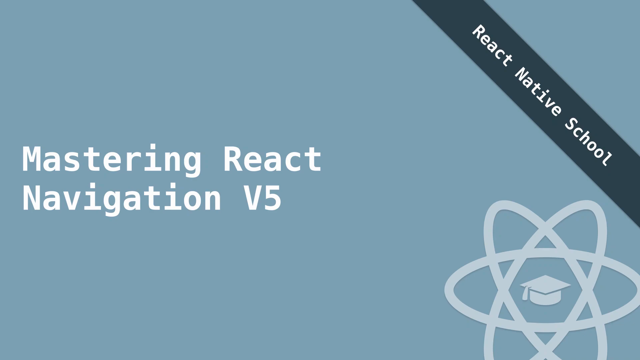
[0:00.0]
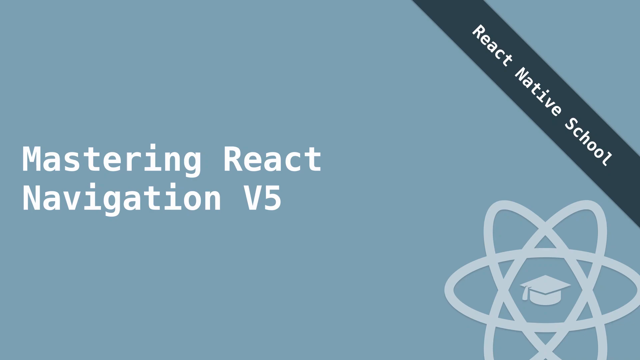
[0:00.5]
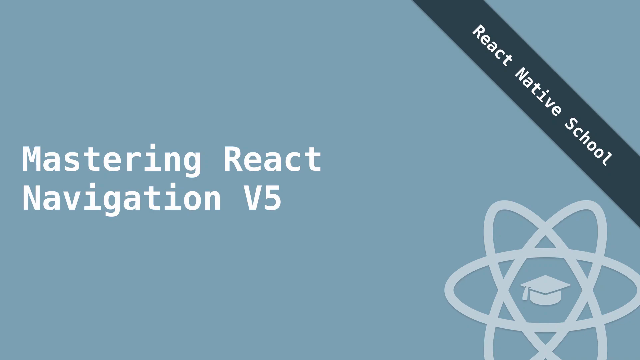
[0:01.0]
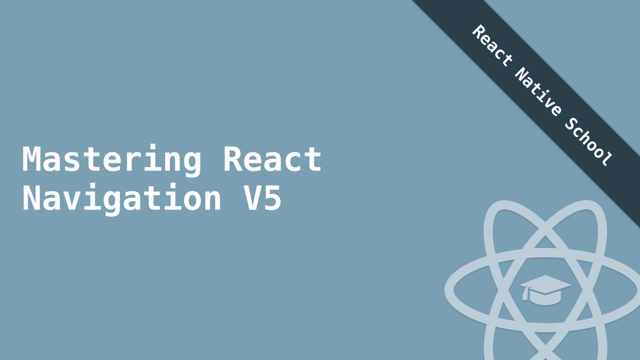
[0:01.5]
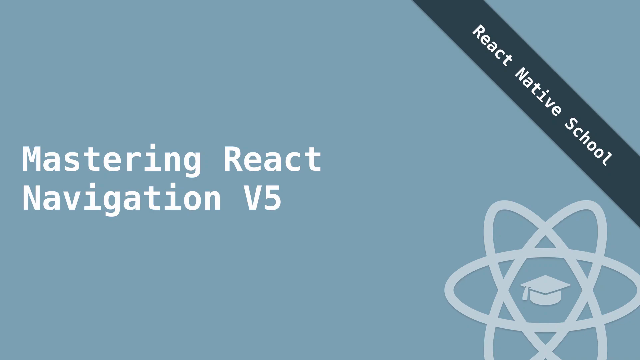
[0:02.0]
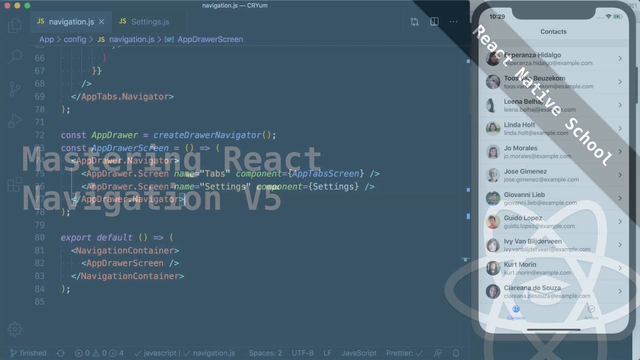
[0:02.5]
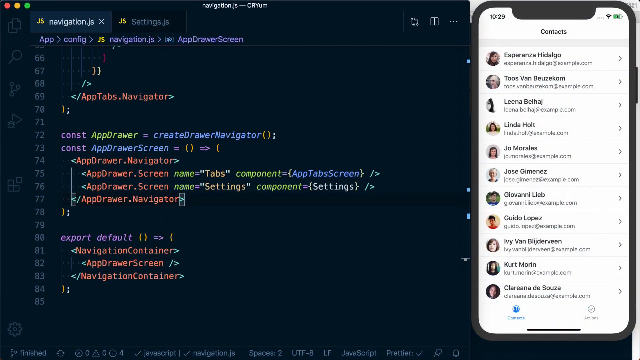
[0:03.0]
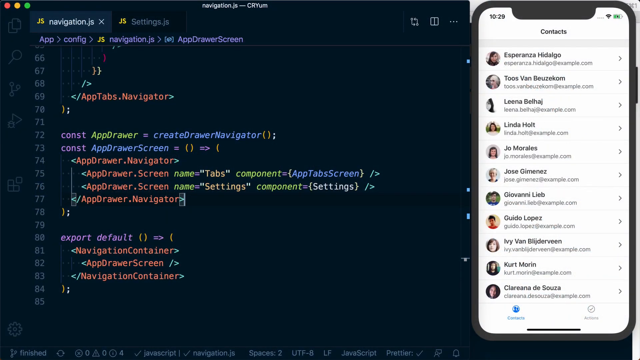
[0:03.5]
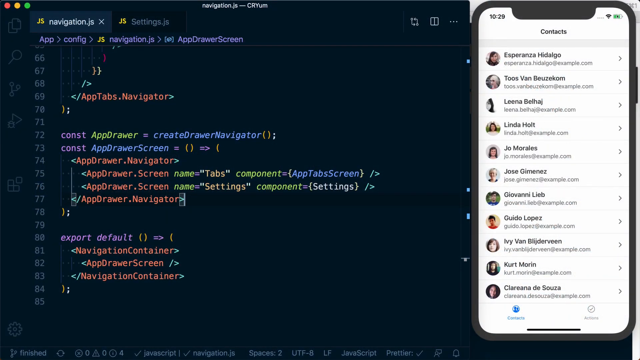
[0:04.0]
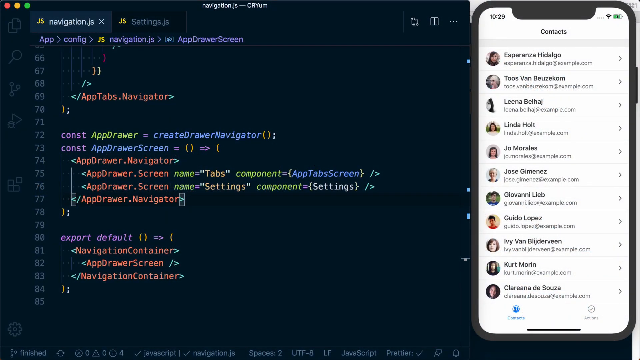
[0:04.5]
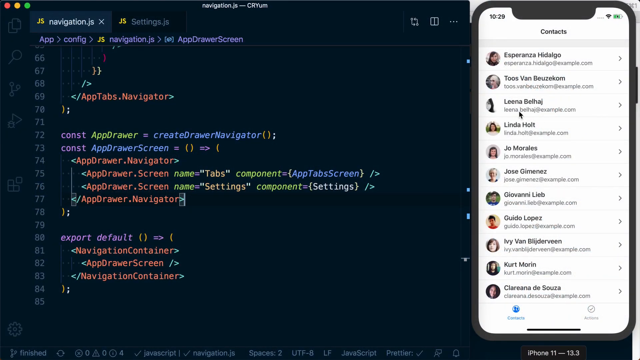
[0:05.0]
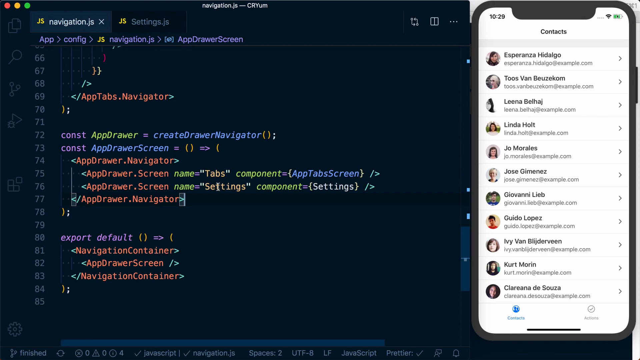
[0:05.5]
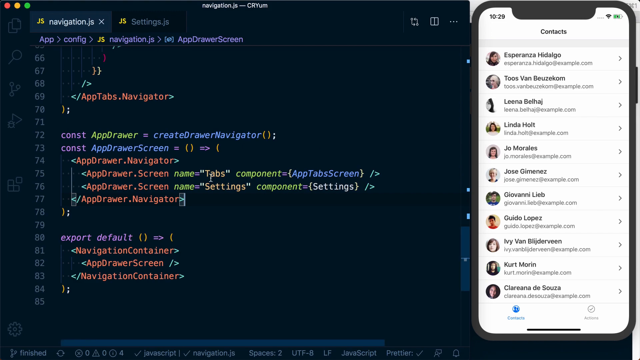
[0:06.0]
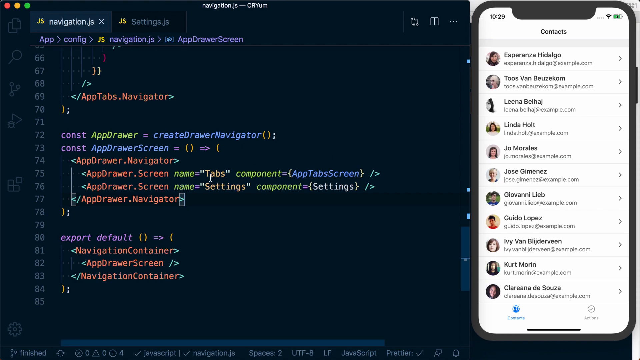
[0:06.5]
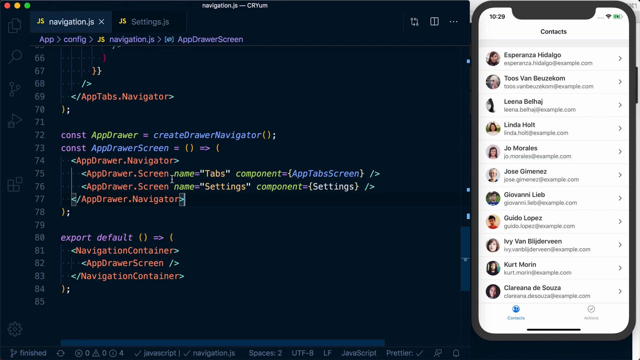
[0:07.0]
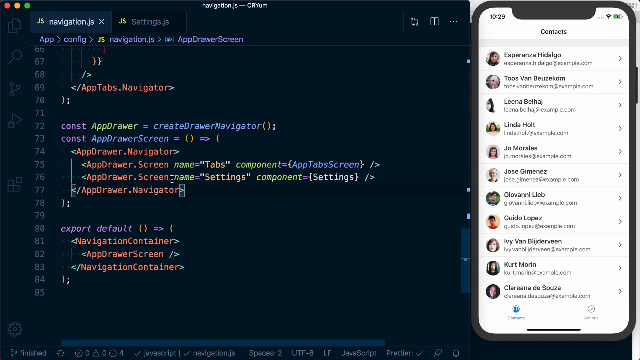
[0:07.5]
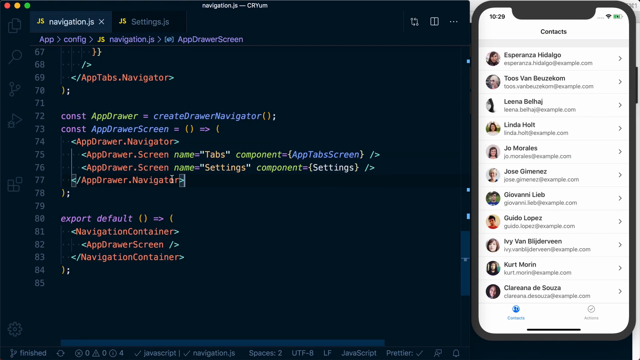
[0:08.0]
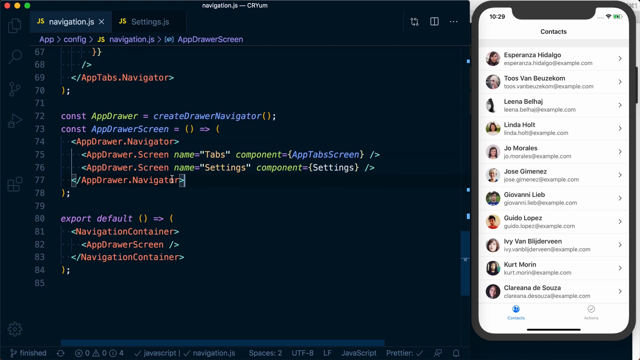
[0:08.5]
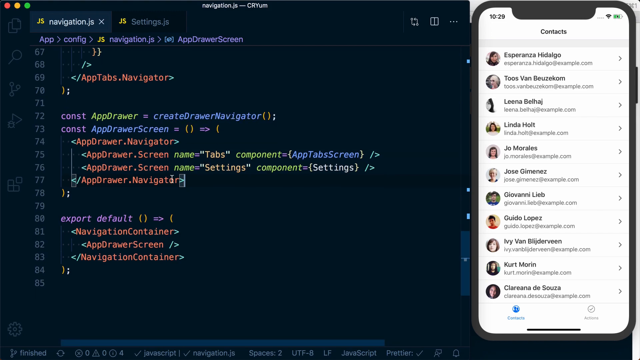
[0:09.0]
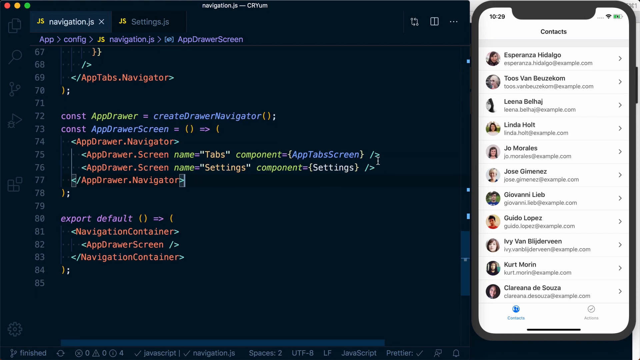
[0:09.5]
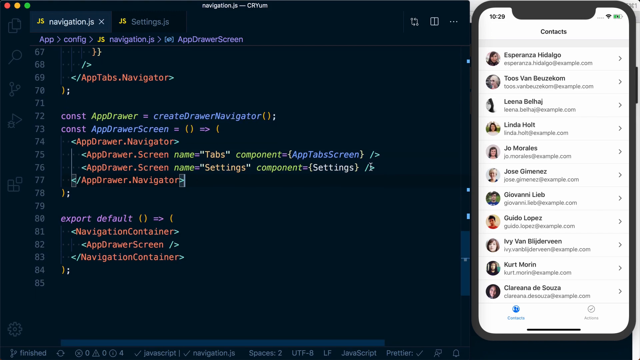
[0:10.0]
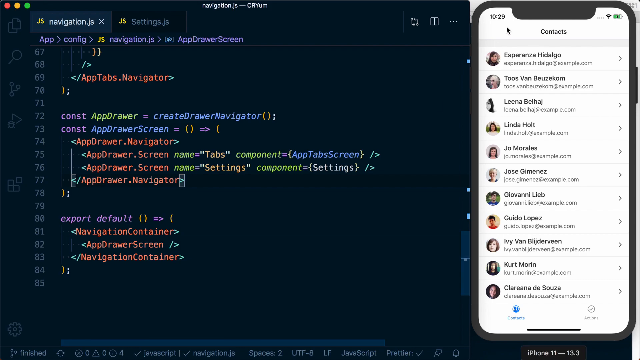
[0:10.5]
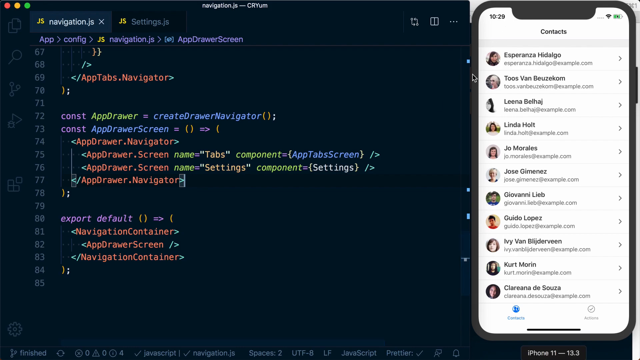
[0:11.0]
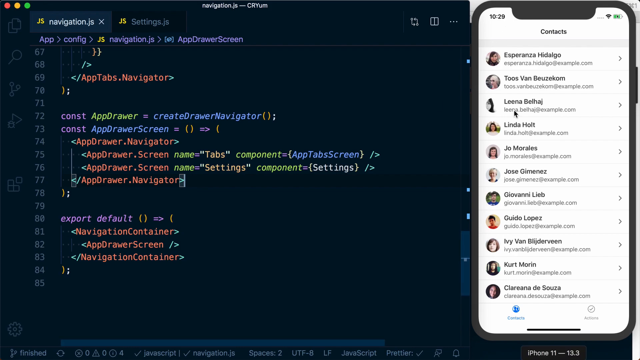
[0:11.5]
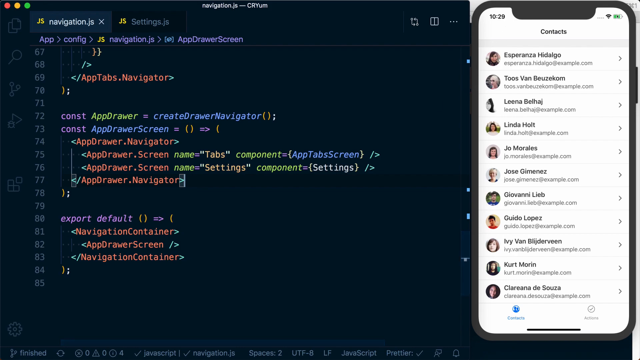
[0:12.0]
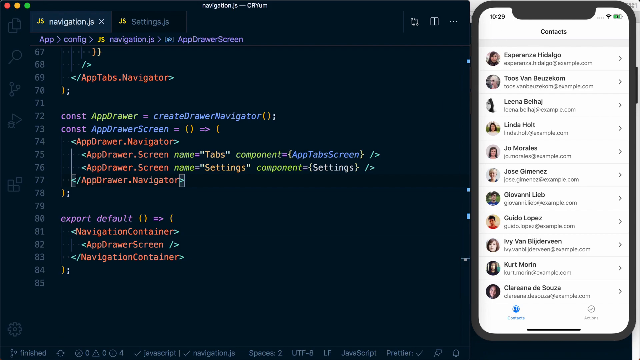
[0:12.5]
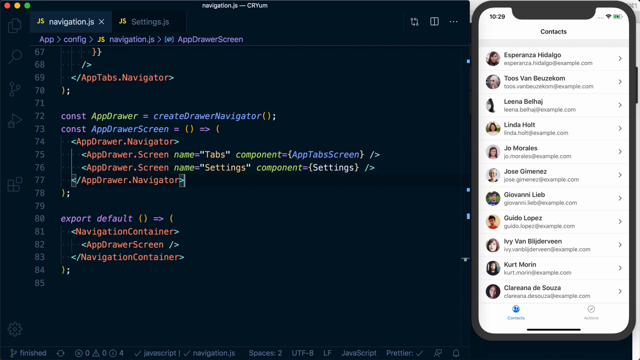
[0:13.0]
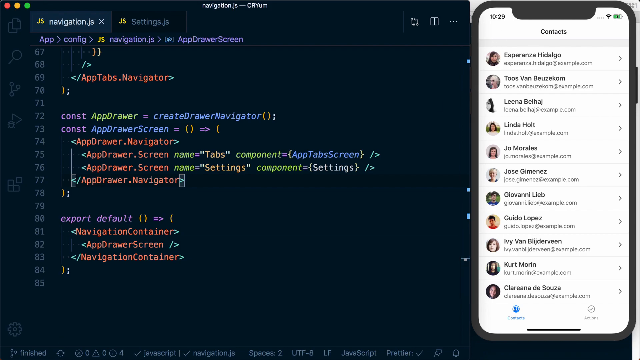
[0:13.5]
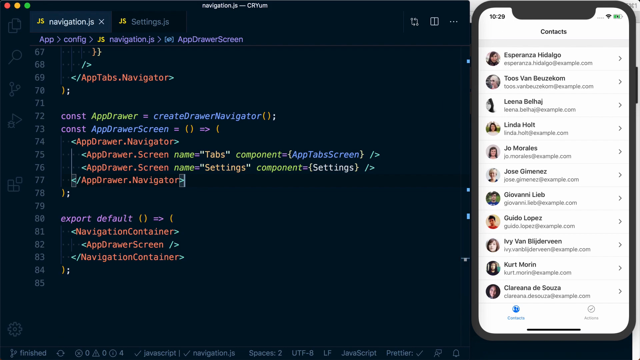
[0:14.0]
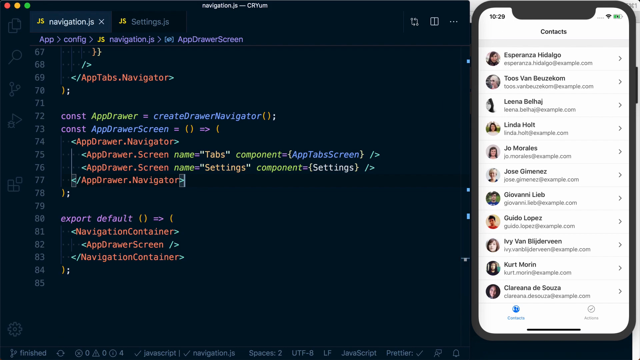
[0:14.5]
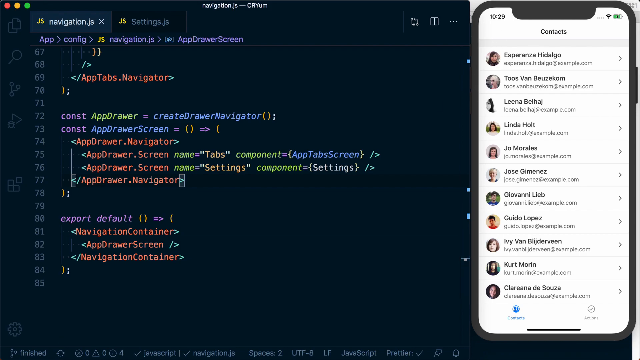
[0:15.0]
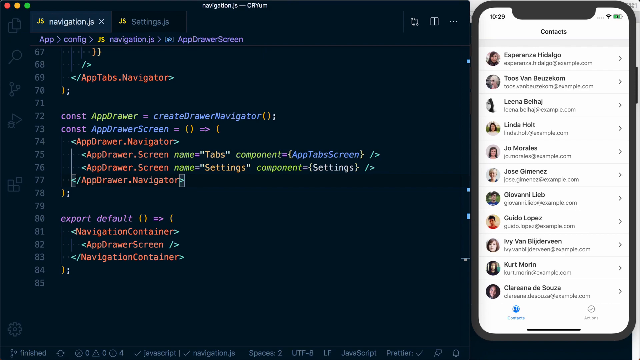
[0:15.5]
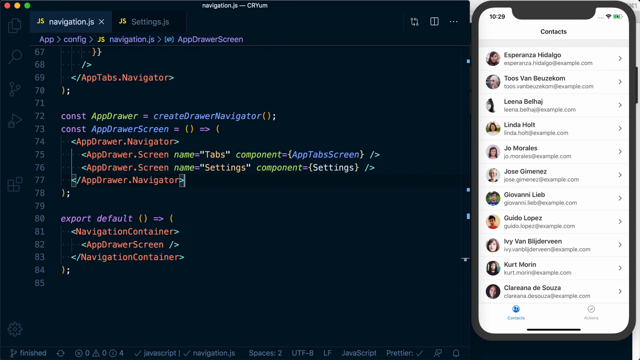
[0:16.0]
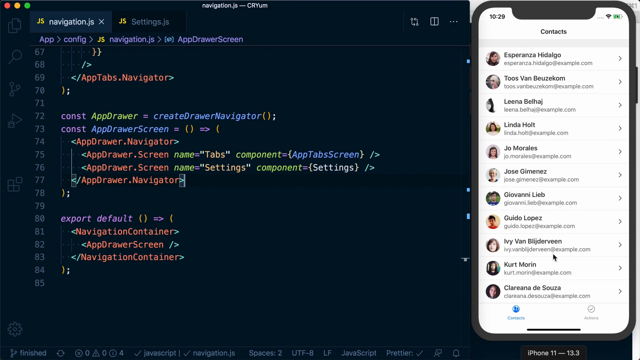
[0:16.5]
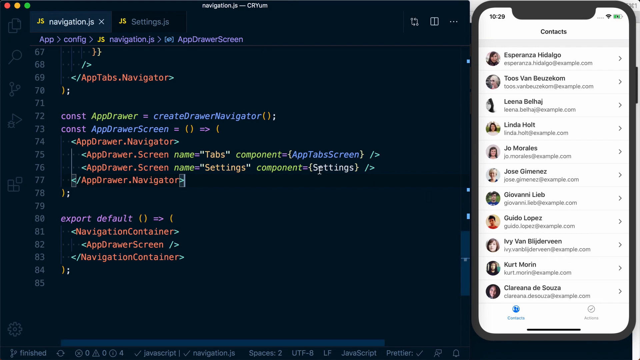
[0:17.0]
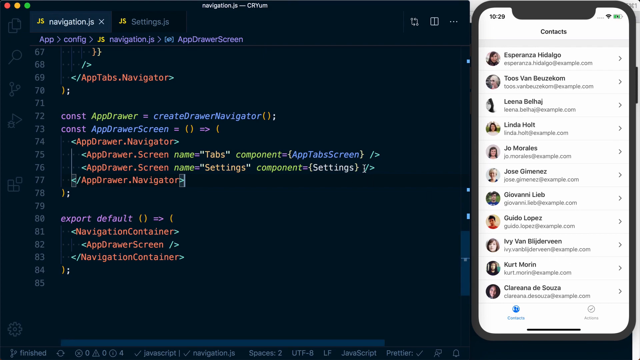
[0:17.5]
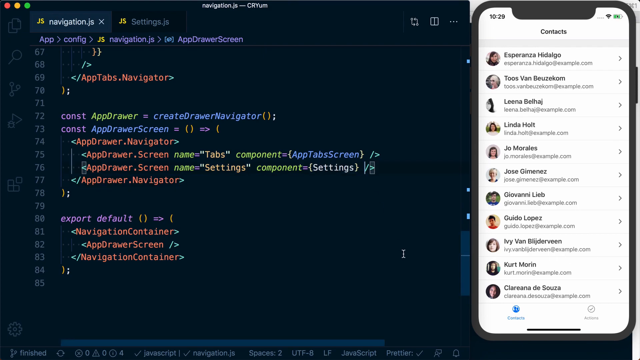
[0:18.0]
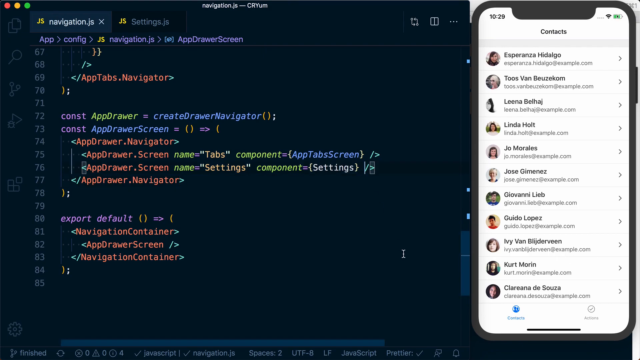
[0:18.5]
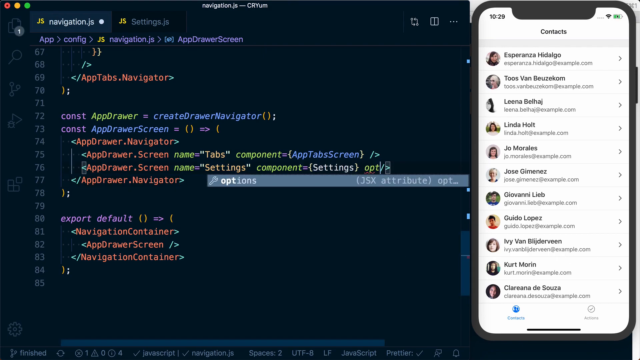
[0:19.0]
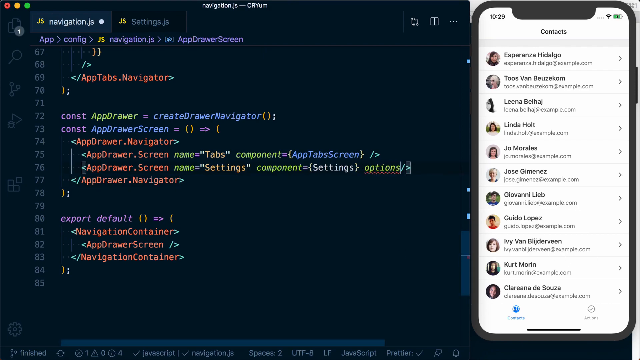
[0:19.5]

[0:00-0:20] On a blue background, somewhat like robin's egg blue, white letters read "mastering react navigation v5". A dark teal banner runs diagonally, reading "react native school", and at the bottom there is a white or light gray nuclear symbol with a graduate's mortarboard cap inside it. The video then moves to a second screen: on the right-hand side is a phone showing a person's contacts, and on the left-hand side is a black screen with what looks like code, apparently involving navigator and navigation. The words of the code are in different colors, and the person points the cursor at things in the code. Then that disappears and the view goes back to the phone, and then back to highlight something in gray font on the coding part of the screen. The code includes "export default" in purple, with other writing in blue, lime and orange.